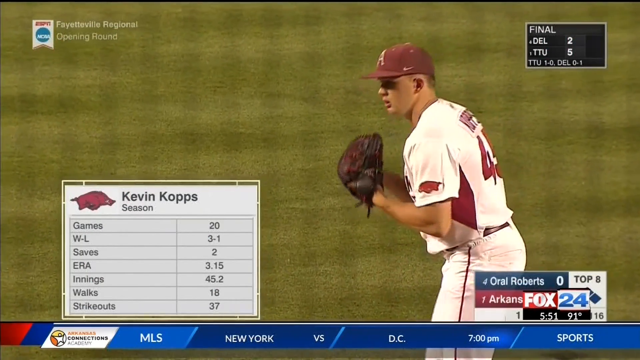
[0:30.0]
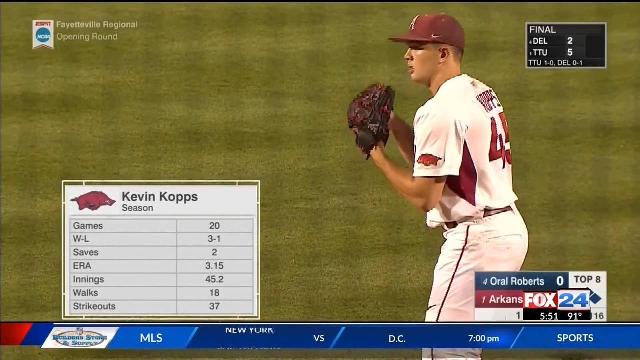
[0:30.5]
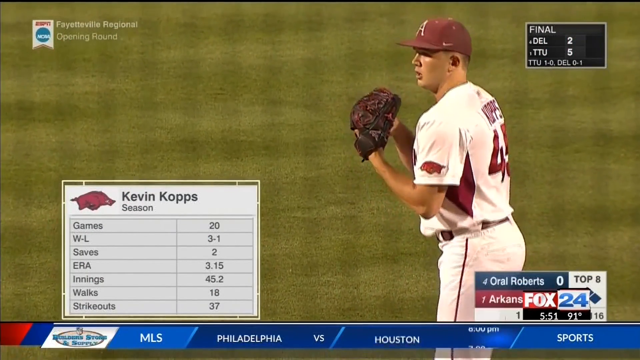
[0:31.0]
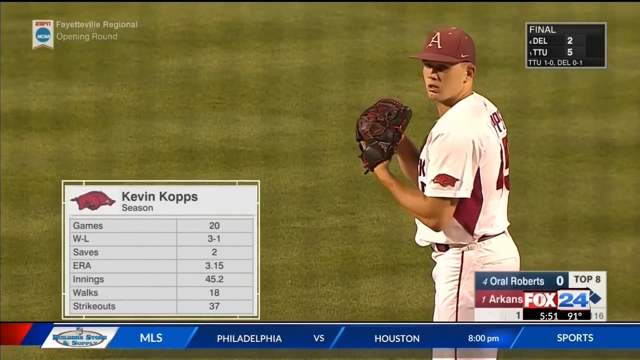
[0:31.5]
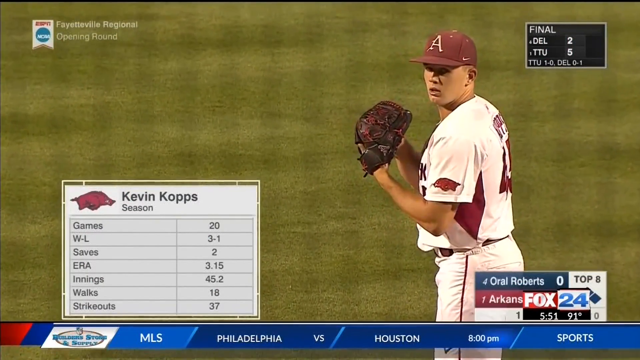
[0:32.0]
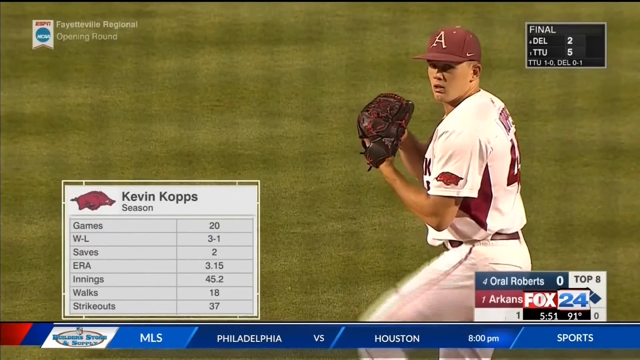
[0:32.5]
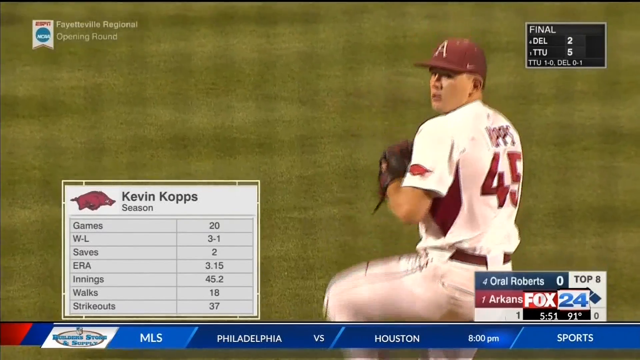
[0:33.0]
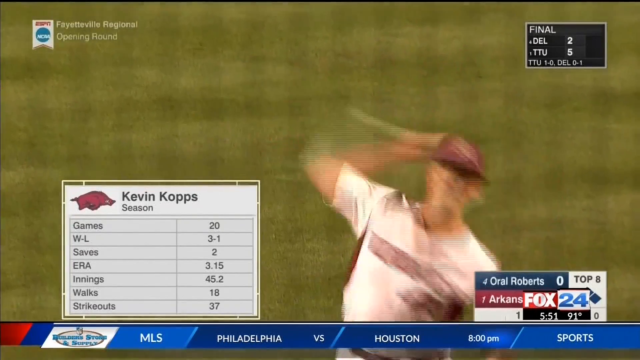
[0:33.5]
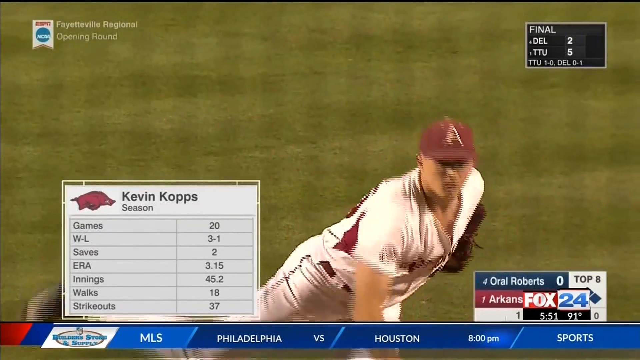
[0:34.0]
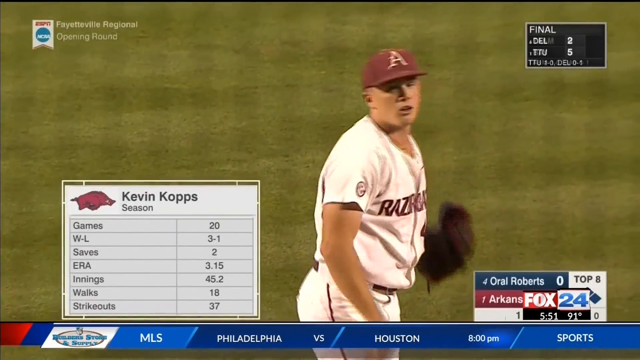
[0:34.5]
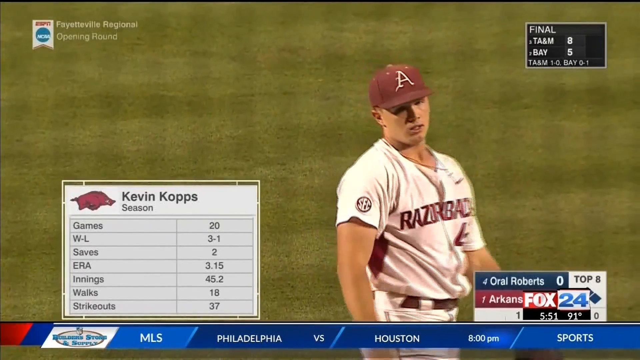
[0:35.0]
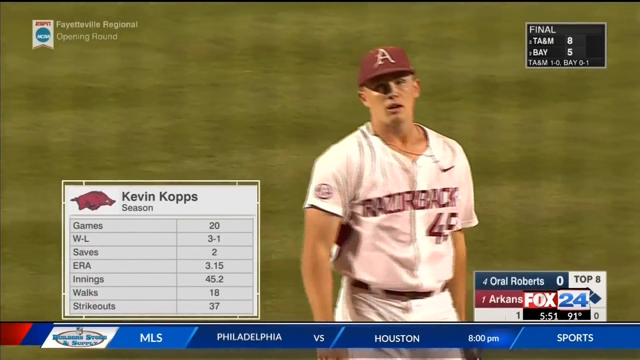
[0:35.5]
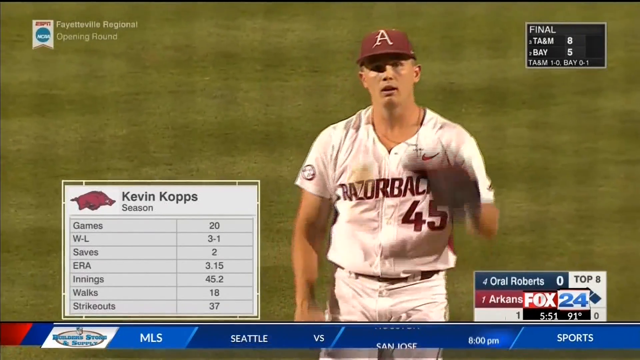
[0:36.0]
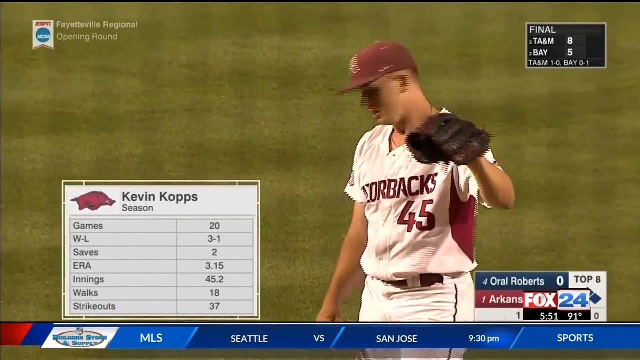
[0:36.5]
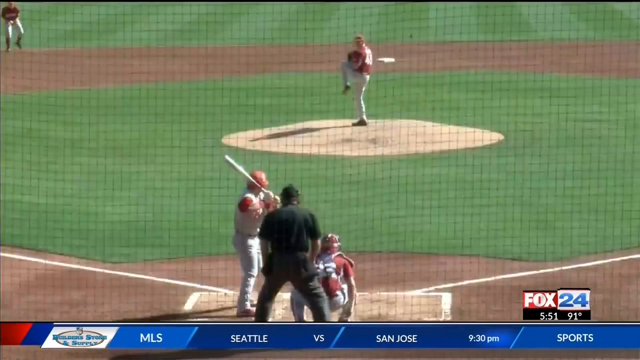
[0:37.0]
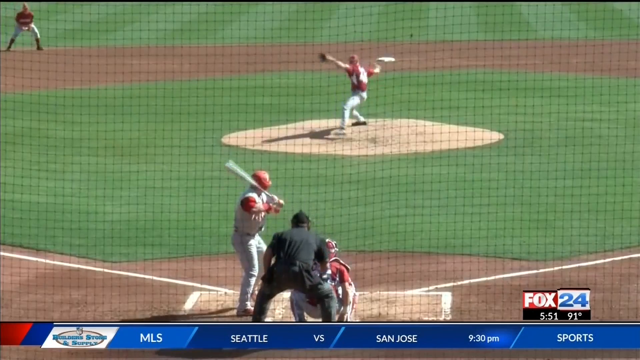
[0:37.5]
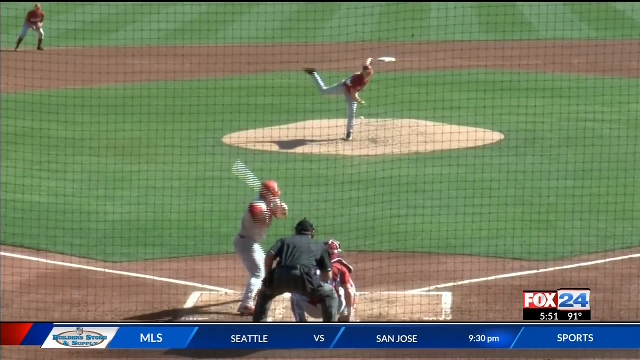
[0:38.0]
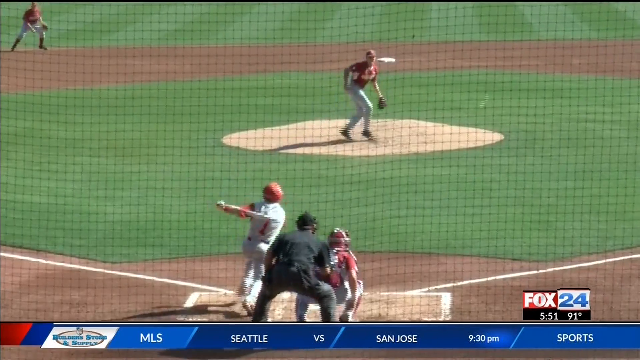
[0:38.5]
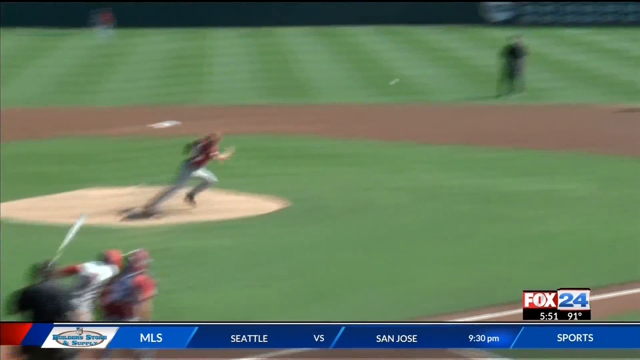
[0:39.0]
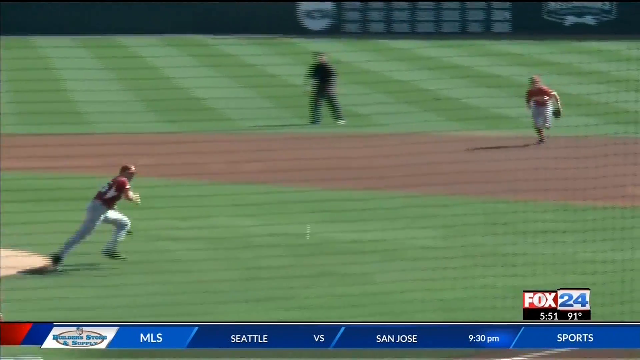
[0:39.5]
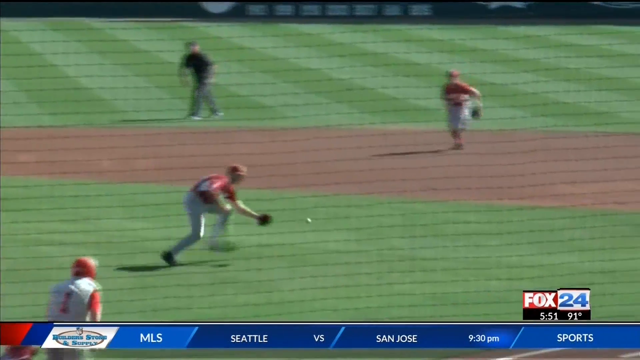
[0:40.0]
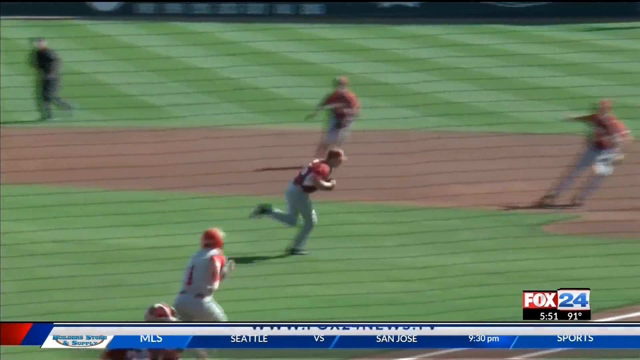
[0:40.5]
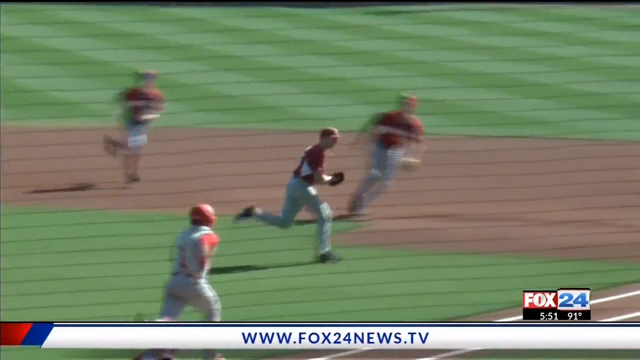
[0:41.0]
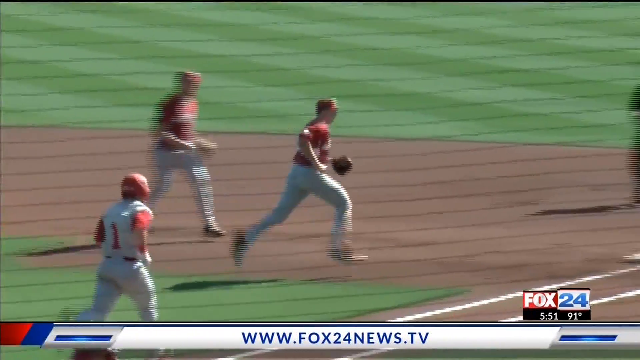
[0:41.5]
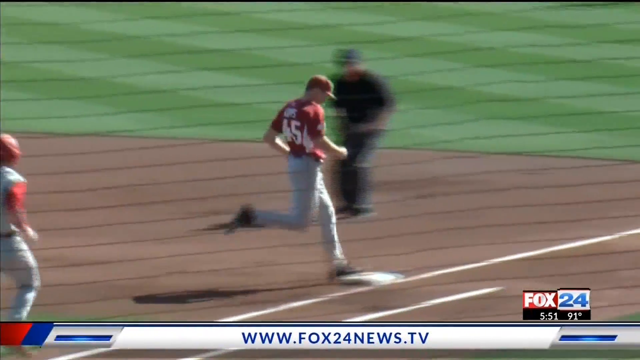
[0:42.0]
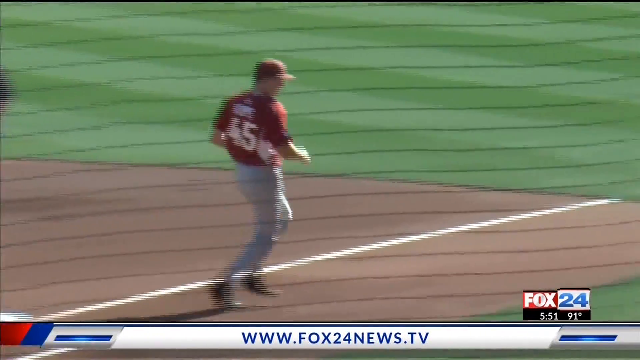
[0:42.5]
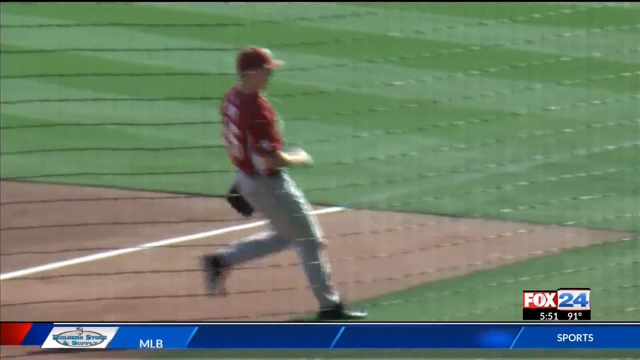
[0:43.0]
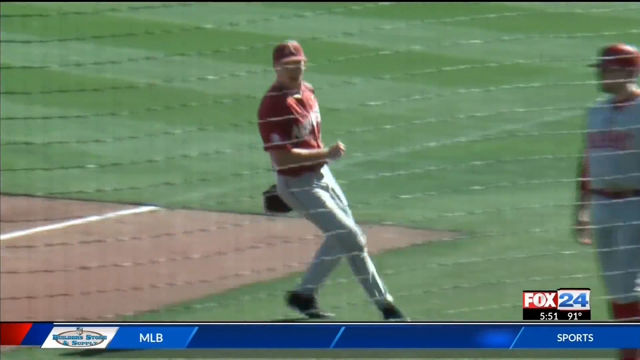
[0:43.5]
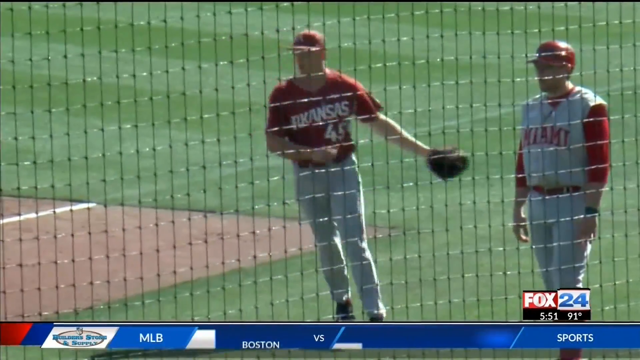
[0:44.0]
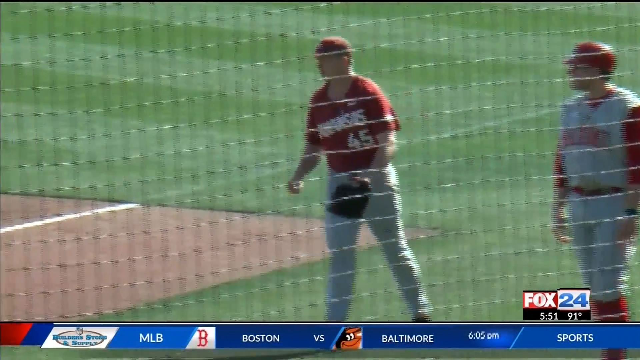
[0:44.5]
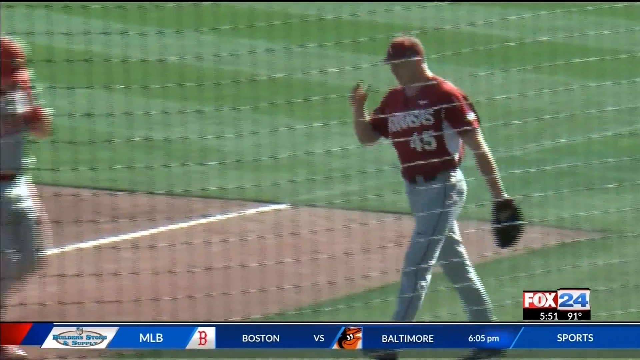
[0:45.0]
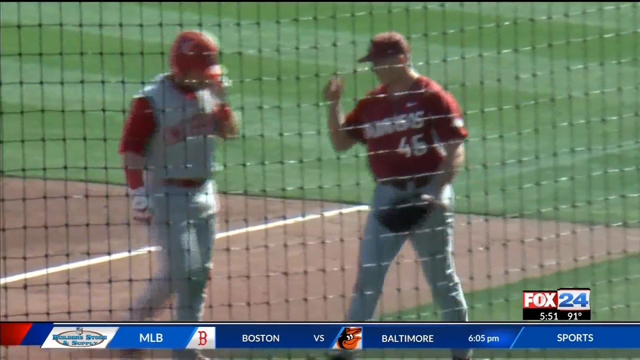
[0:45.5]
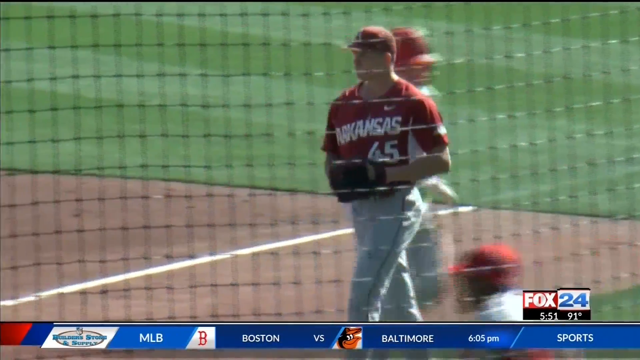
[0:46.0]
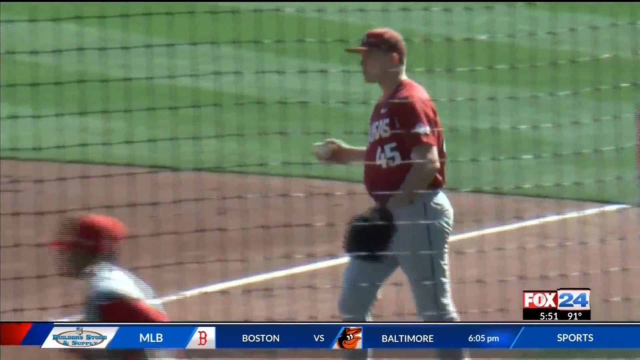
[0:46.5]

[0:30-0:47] The statistics show that Kevin Copps has given up 18 walks and has 37 strikeouts. Arkansas is playing Oral Roberts, and another score is also shown: TTU 5, DEL 2. Copps, who plays for the Razorbacks, looks and throws, shown in slow motion. The ball is hit roughly toward the second baseman, but Copps picks it up, rushes to the base before the runner gets there, throws the ball and gets the runner out.